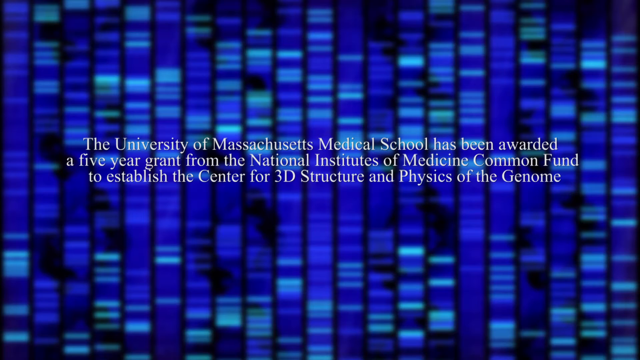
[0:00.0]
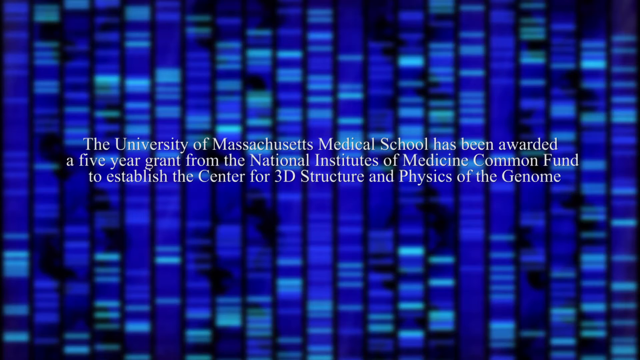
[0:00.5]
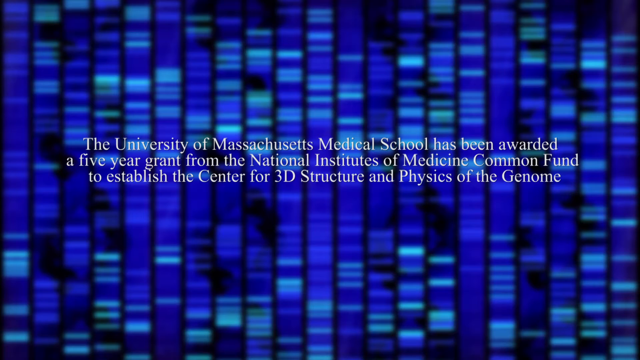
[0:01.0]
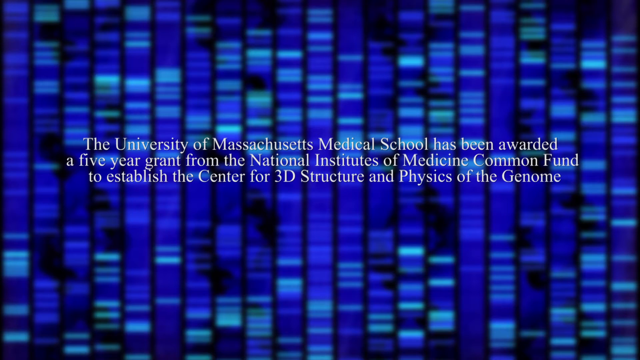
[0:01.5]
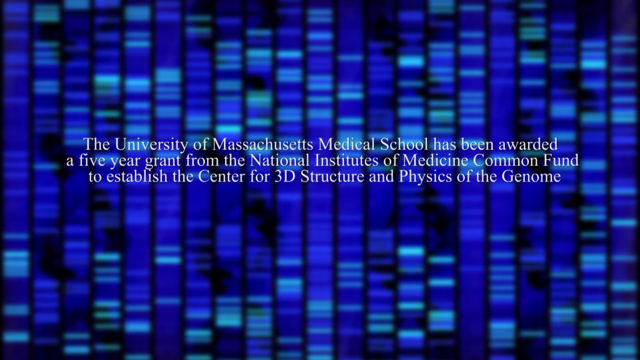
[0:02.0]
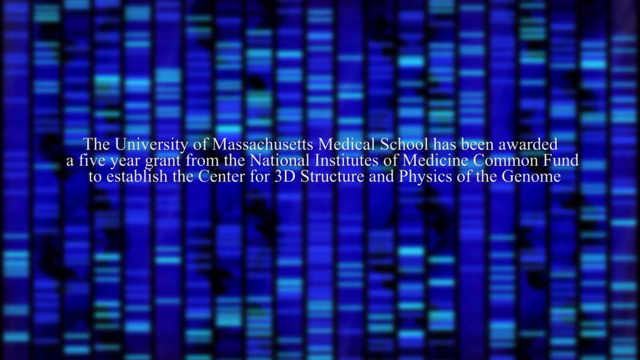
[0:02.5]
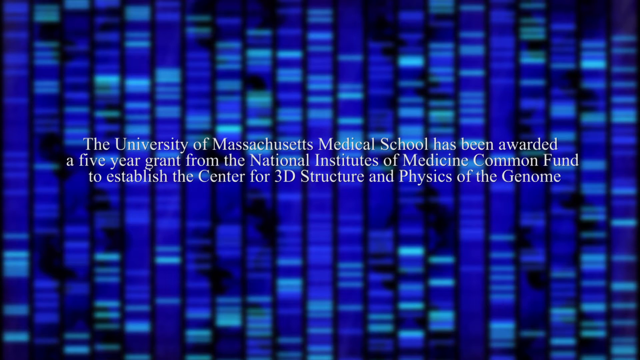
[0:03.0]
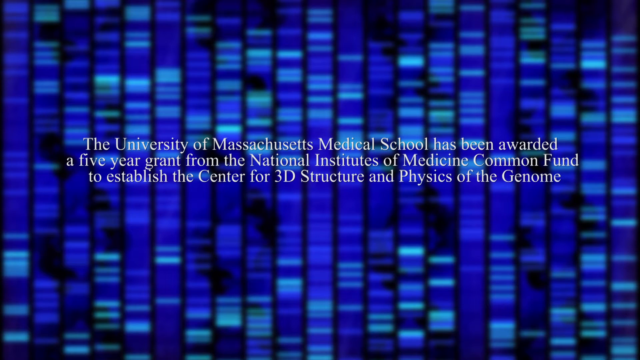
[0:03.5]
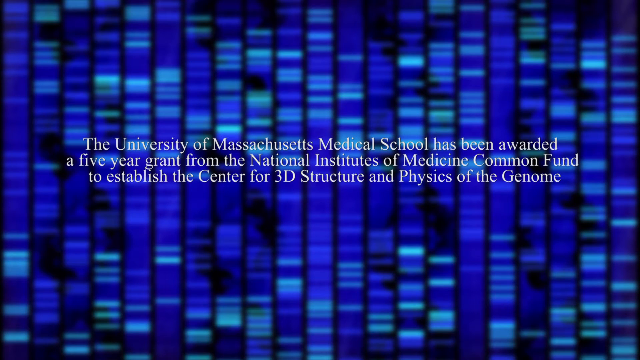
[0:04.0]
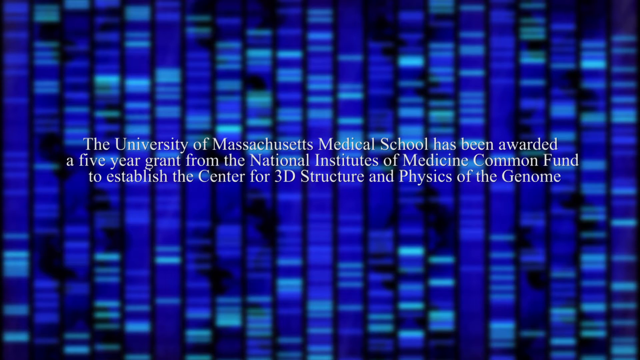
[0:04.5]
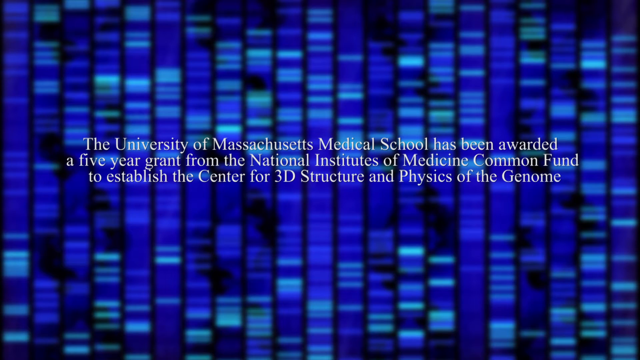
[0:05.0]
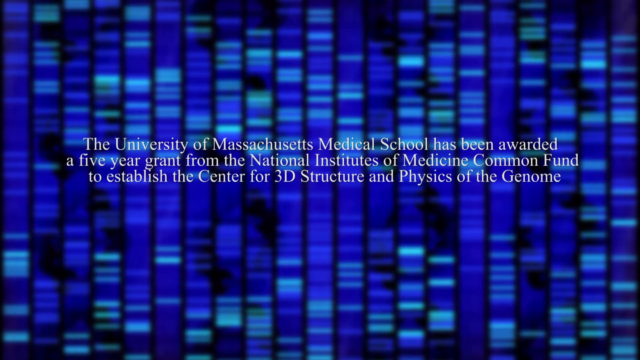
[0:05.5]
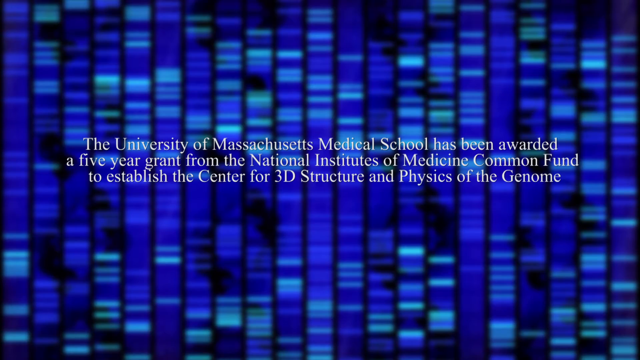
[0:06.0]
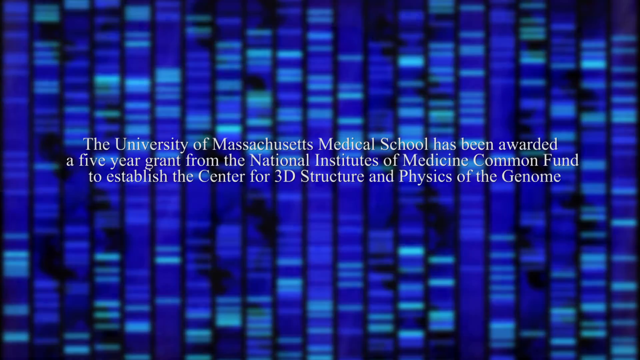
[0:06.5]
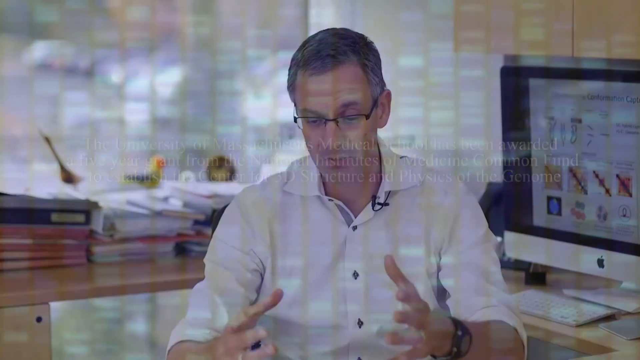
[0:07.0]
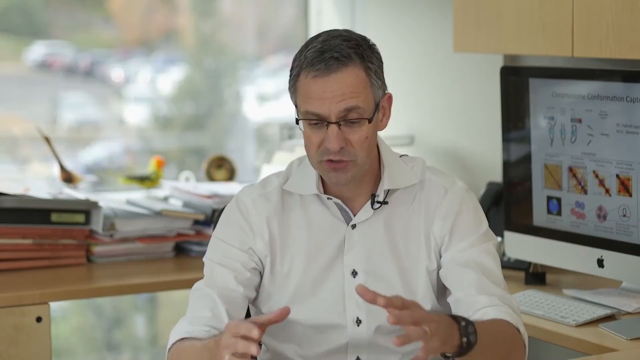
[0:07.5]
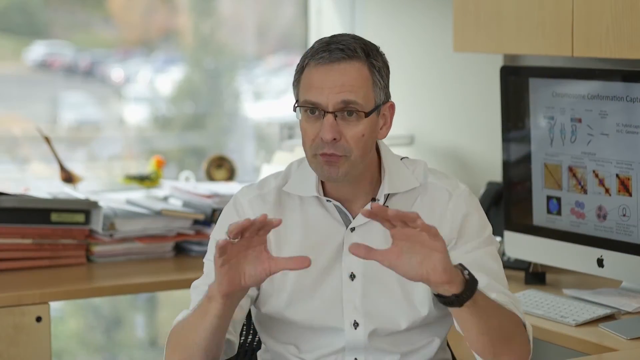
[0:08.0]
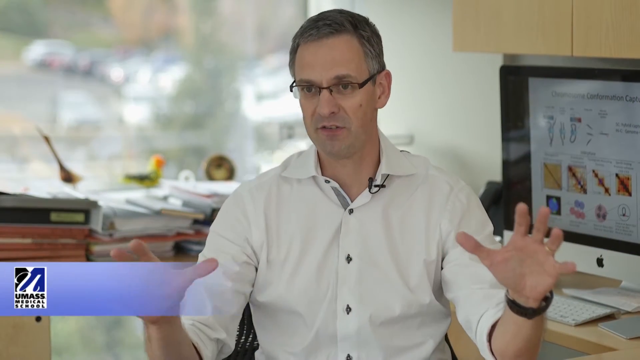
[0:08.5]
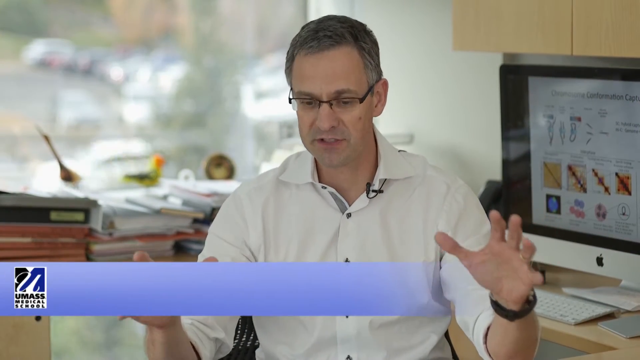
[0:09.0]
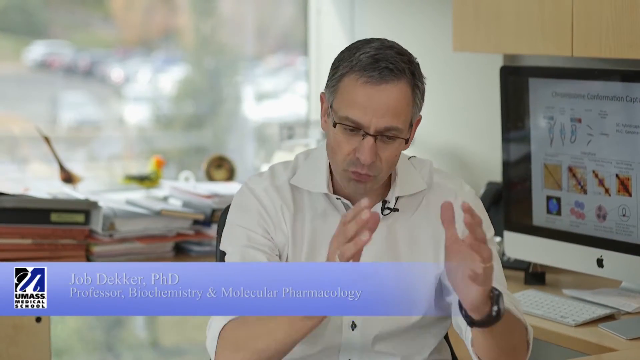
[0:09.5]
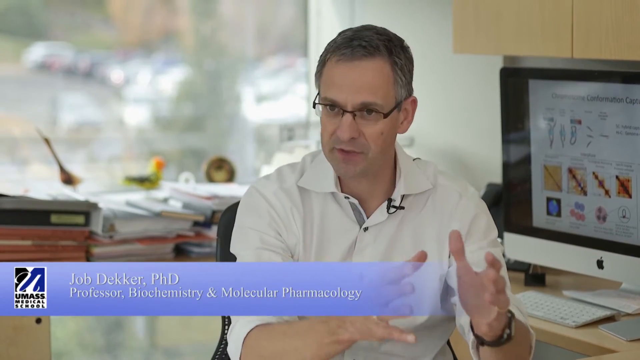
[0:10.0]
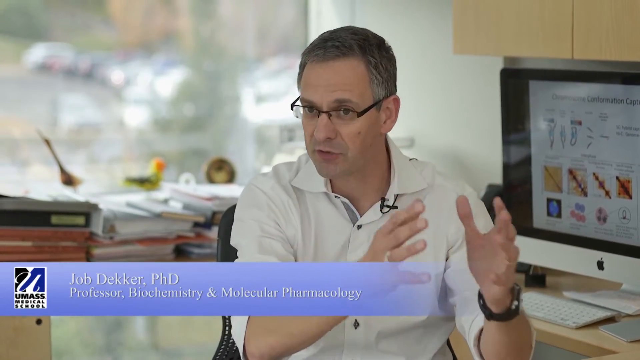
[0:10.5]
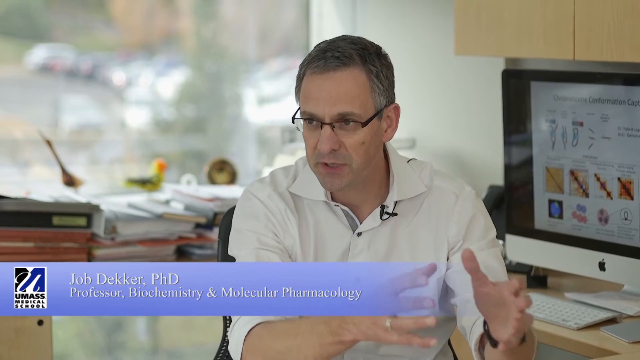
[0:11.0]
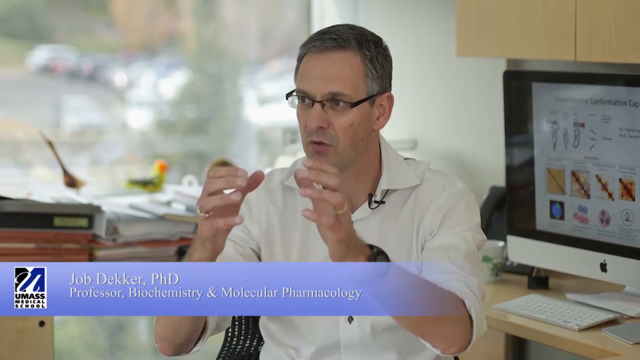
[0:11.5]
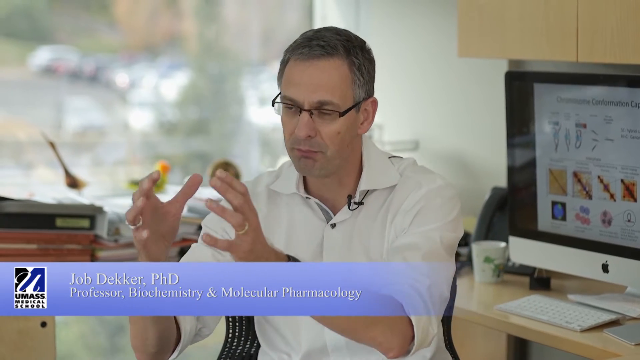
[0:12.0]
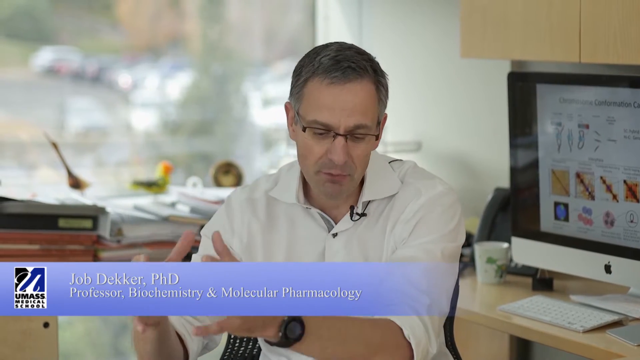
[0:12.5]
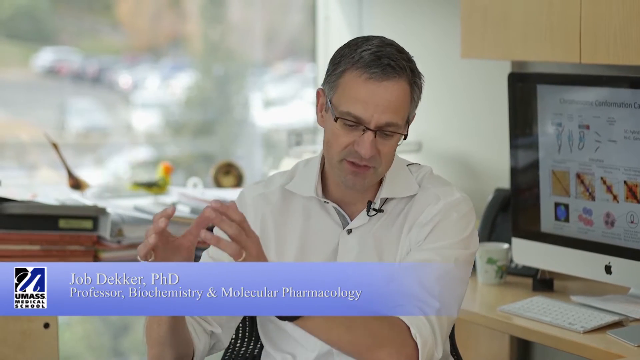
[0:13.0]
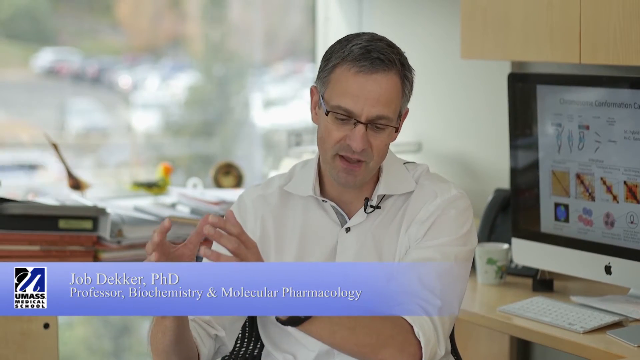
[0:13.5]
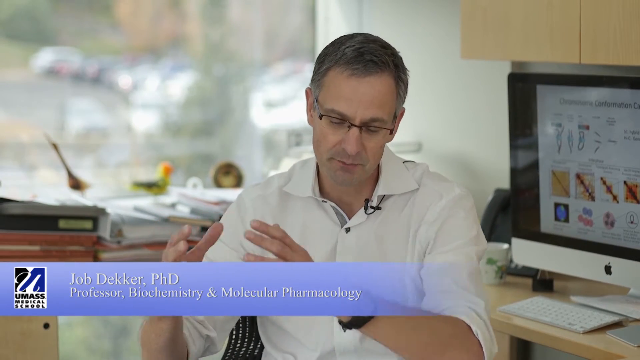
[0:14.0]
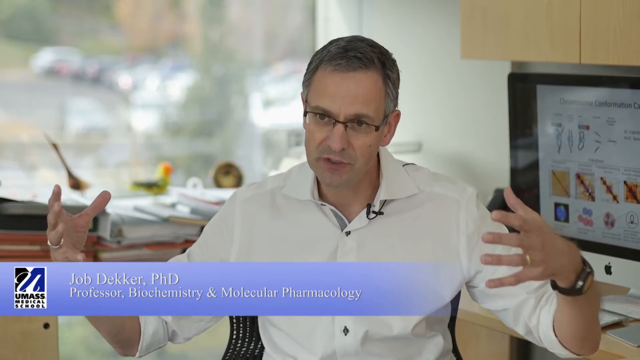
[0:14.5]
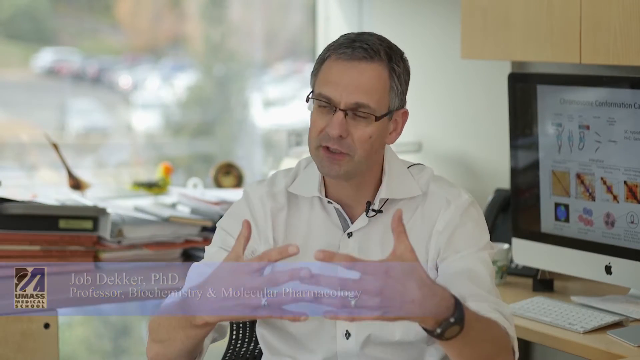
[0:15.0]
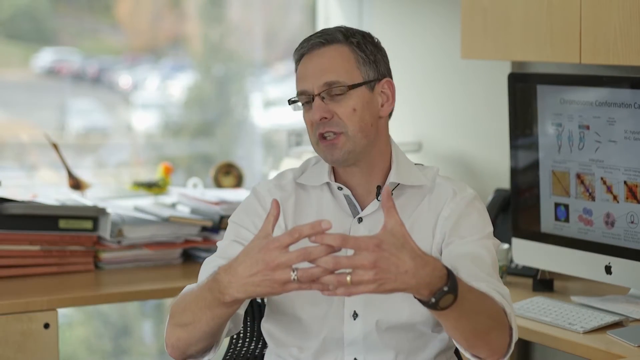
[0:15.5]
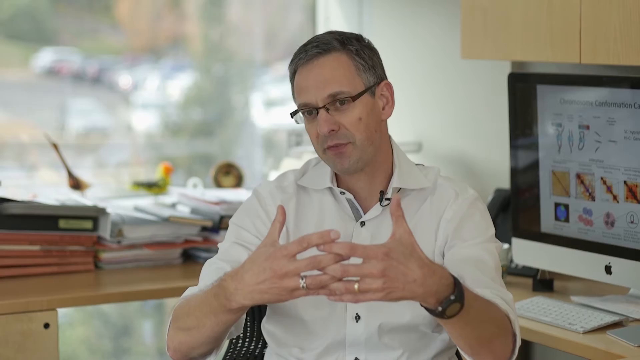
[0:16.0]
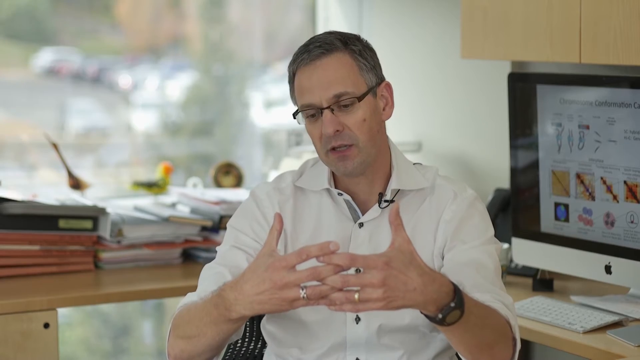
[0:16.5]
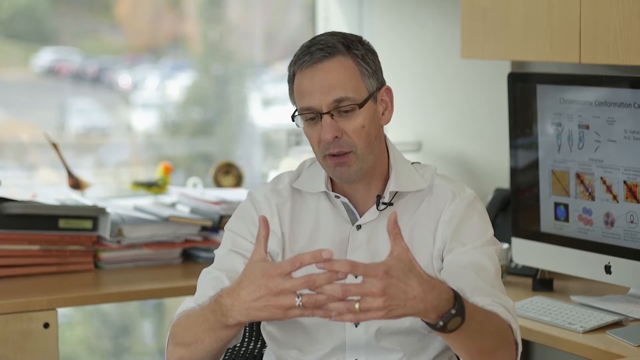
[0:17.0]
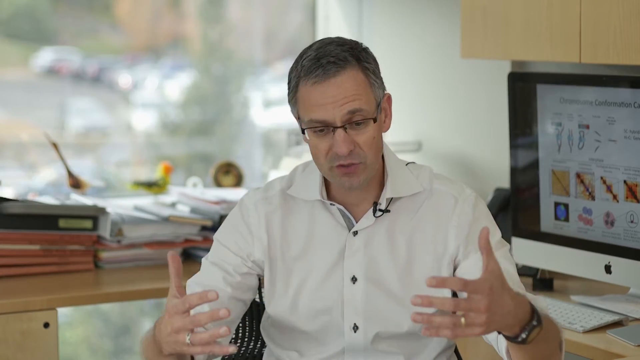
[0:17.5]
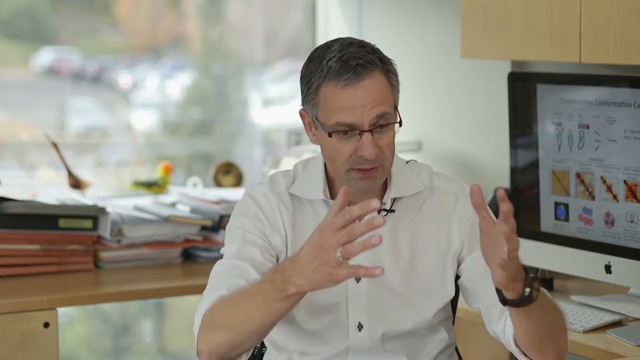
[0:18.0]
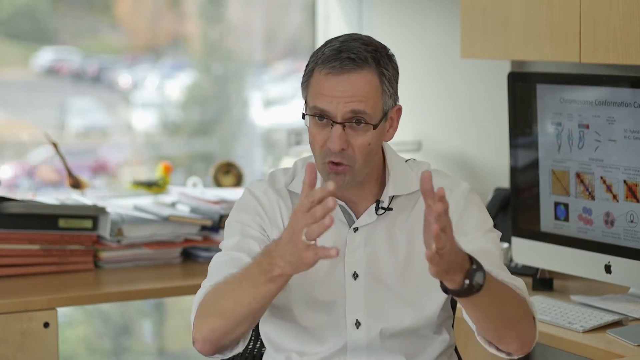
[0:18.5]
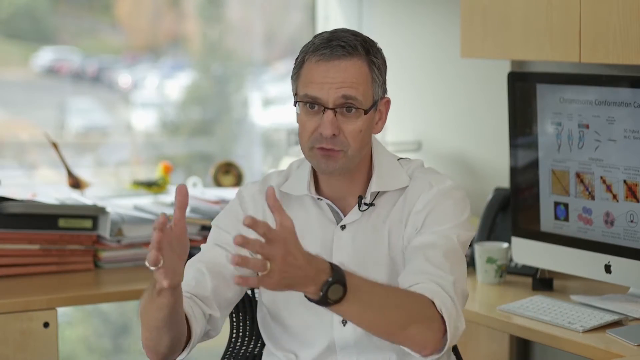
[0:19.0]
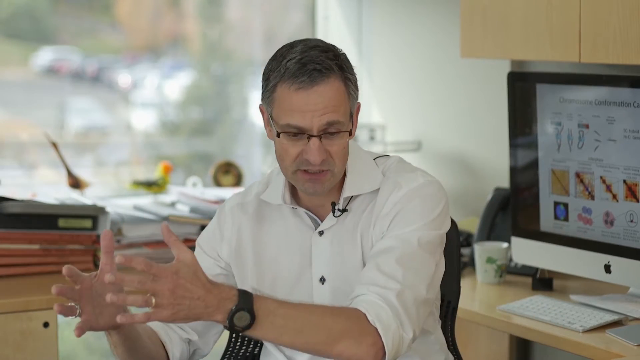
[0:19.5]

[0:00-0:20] The video opens with text on a blue background: "University of Massachusetts Medical School has been awarded a five year grant from the National Institutes of Medicine Common Fund to establish the Center for 3D structure and physics of the genome". A man then appears on screen: a Caucasian man with glasses, wearing a watch and a white shirt, next to a computer and some books. His name is Job Dekker, PhD, professor of biochemistry and molecular pharmacology from the University of Massachusetts. He wears a wedding ring, and a microphone appears to be attached to his collar. It is daytime.